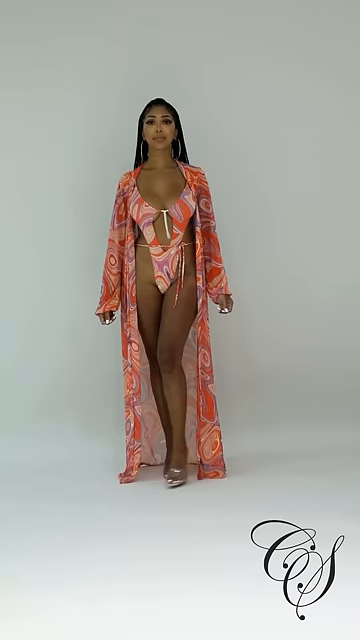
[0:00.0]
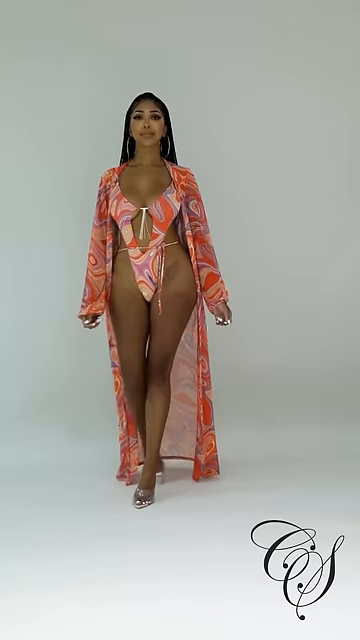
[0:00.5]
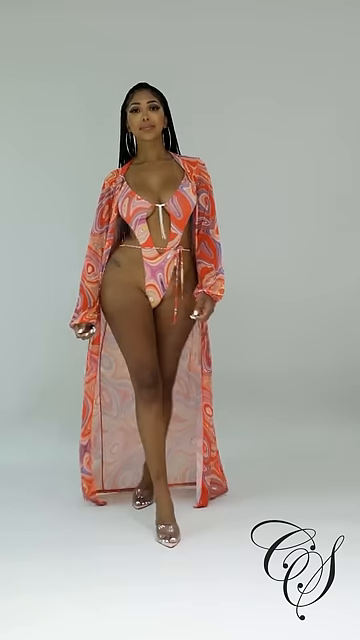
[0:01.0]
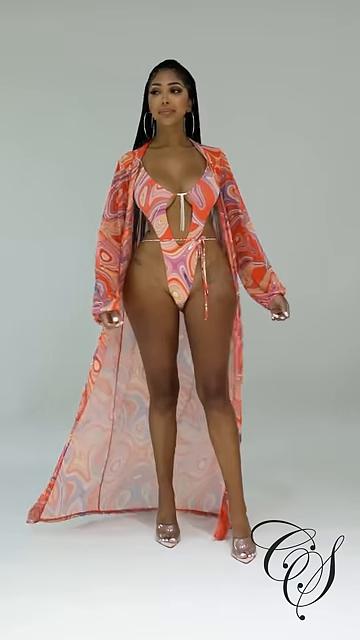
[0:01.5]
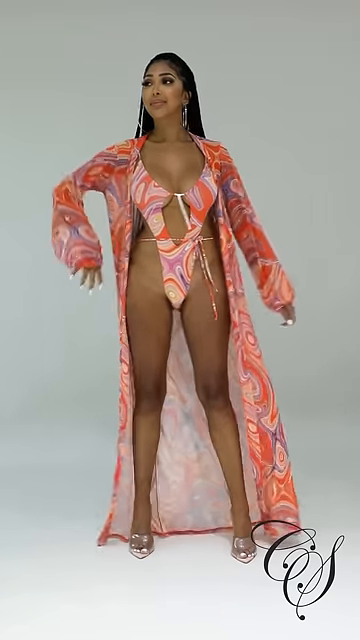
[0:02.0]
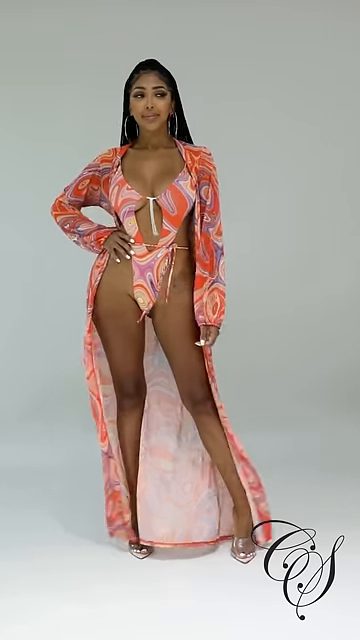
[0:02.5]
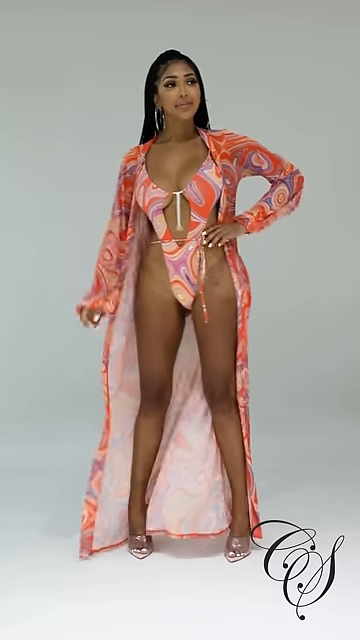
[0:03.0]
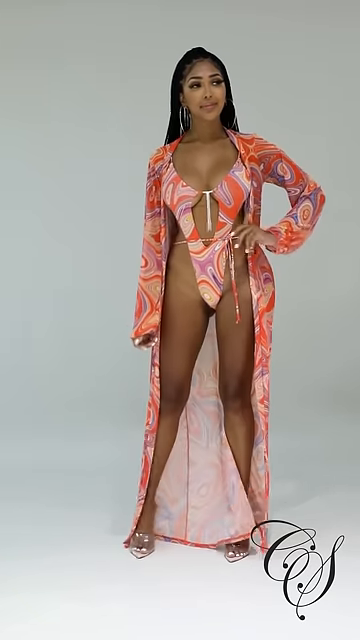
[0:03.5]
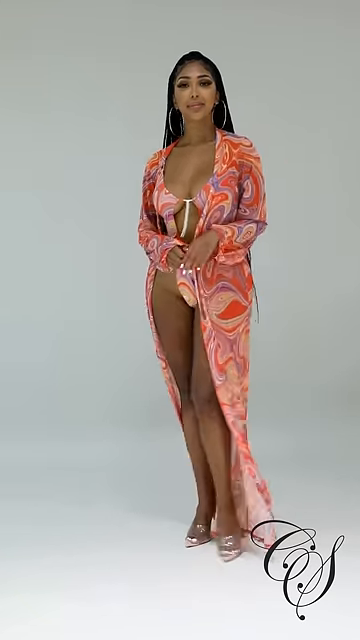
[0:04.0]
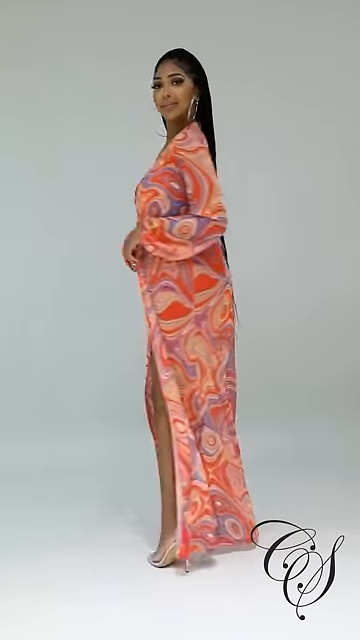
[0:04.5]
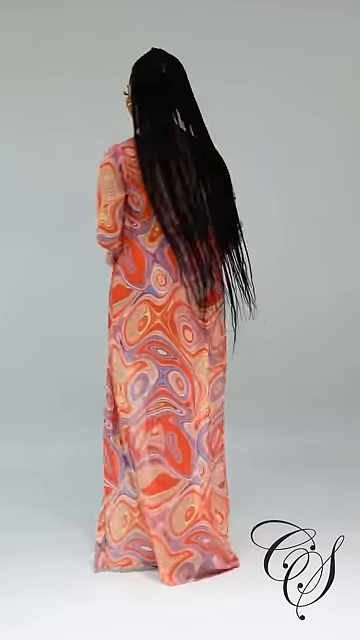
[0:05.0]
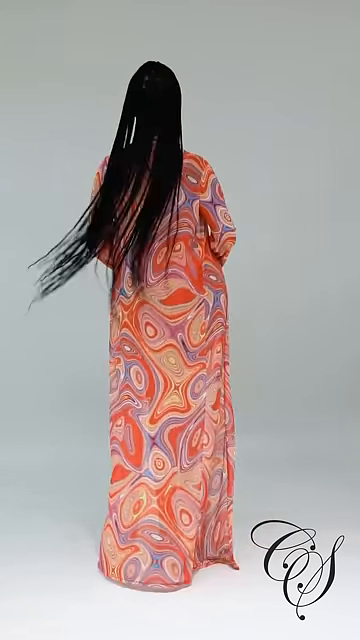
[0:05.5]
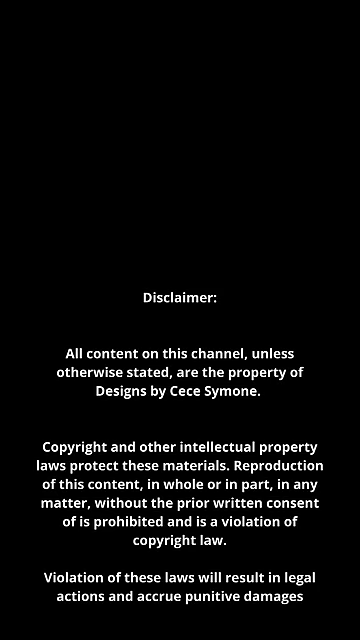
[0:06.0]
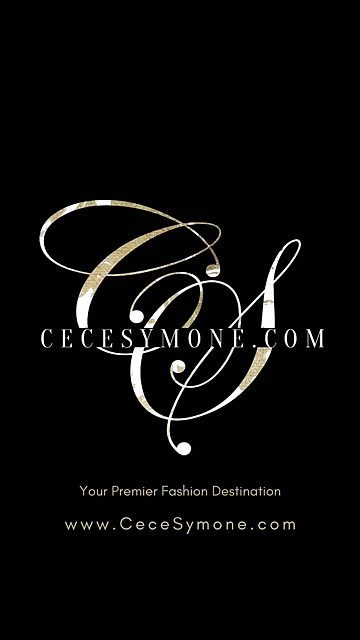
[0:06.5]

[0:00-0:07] A fairly dark-skinned woman with very long black hair, gold hoop earrings, long eyelashes and long white fingernails models in front of an off-white background and floor. She walks, struts and poses in a very revealing orange, purple and yellow swimsuit with a sort of psychedelic print. The swimsuit comes up between her thighs and up around her shoulders, leaving her hips fully exposed. She also wears a tie around her waist and a very long kimono in the same print. As she turns around and walks away, a black screen appears with a large disclaimer in white text. It reads: "Disclaimer, all content on this channel, unless otherwise stated, are the property of designs by CeCe Symone. Copyright and other intellectual property laws protect these materials." A further sentence begins "Reproduction of this content, in whole or in part," and the disclaimer ends with "Violation of these laws will result in legal actions and accrue punitive damages." A CS script logo follows, with text that says "cecesymone.com, your premier fashion destination."